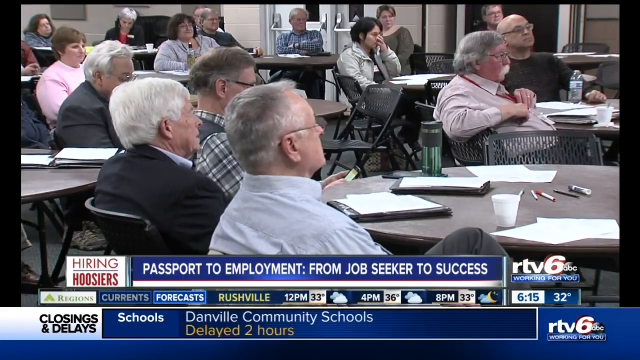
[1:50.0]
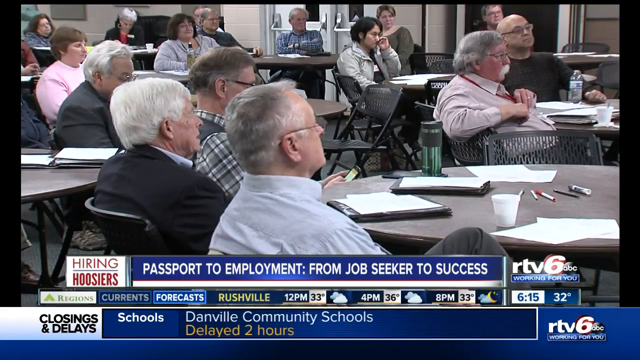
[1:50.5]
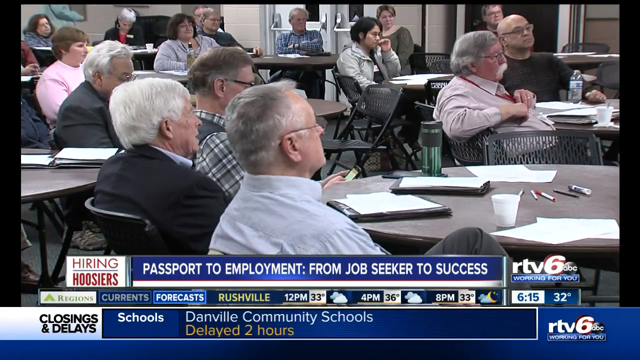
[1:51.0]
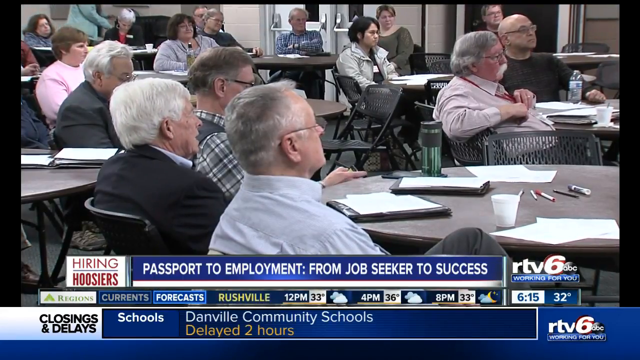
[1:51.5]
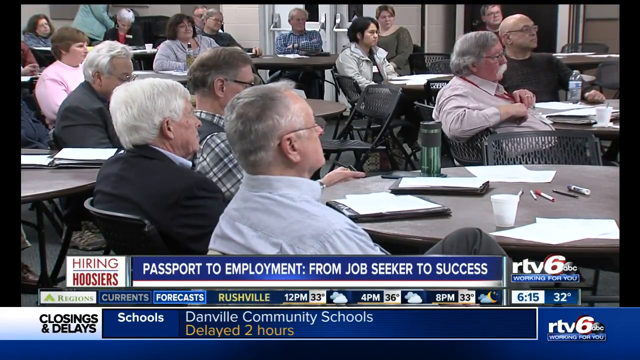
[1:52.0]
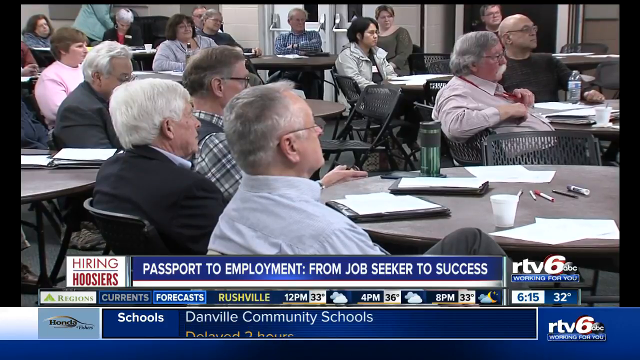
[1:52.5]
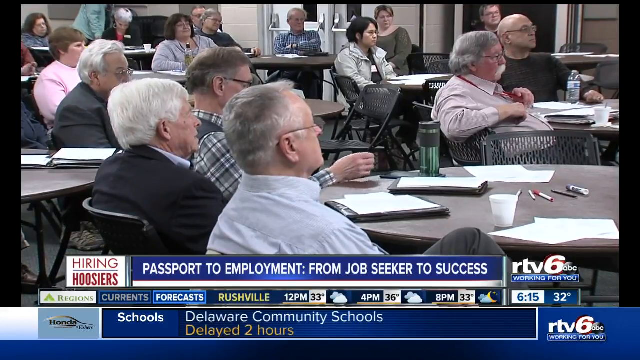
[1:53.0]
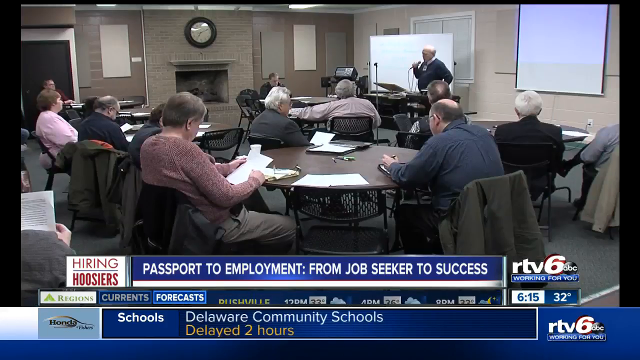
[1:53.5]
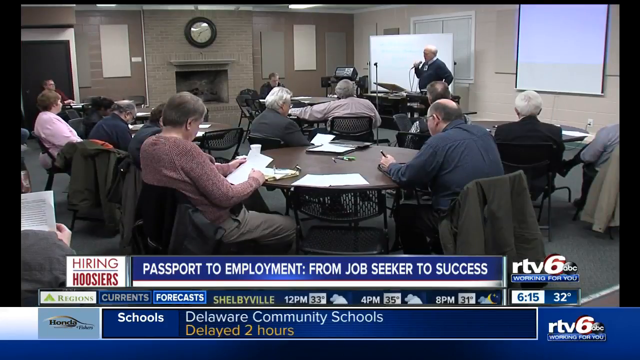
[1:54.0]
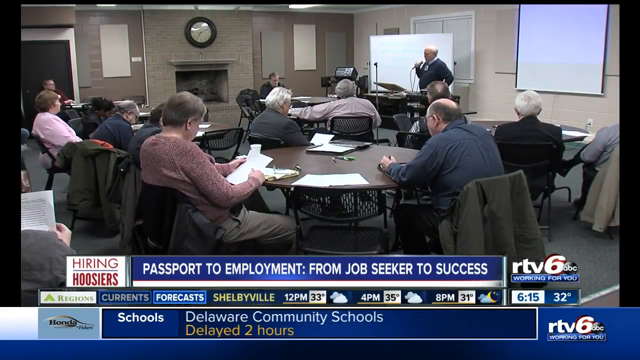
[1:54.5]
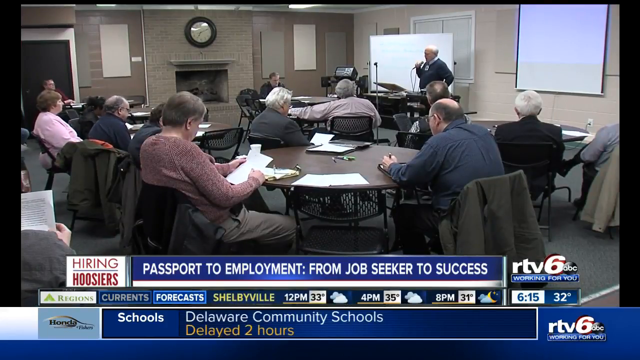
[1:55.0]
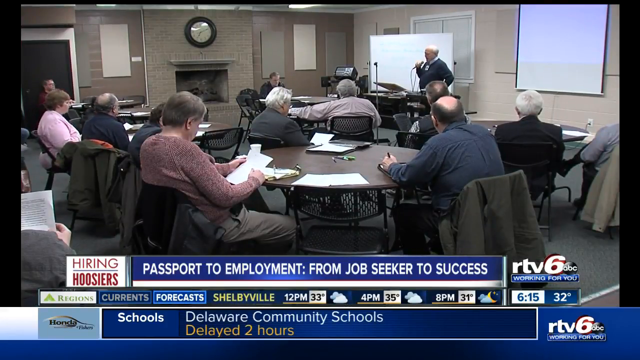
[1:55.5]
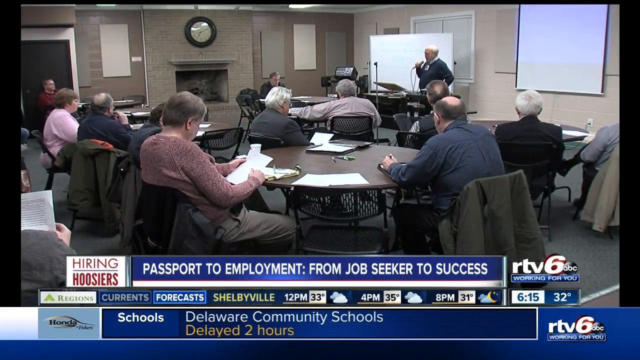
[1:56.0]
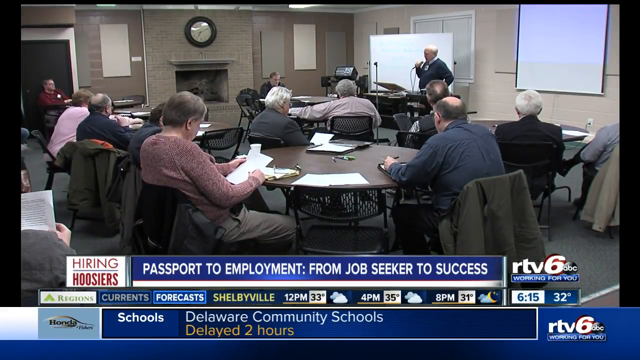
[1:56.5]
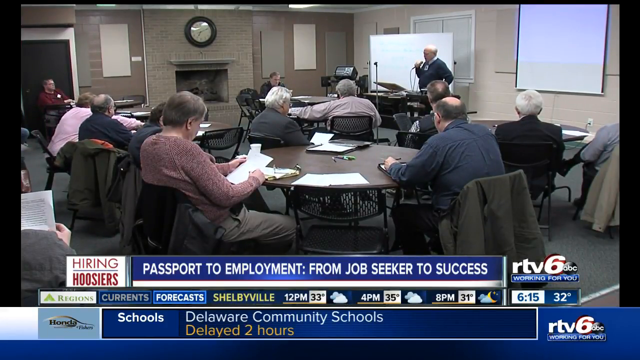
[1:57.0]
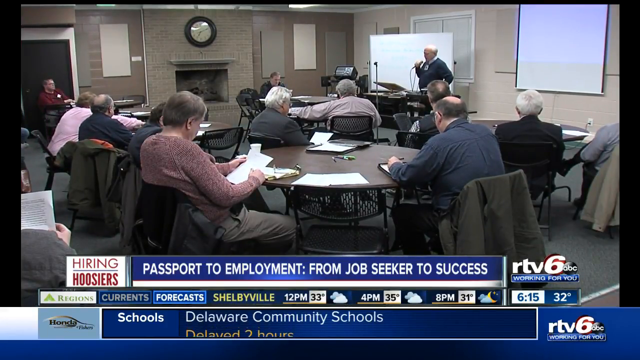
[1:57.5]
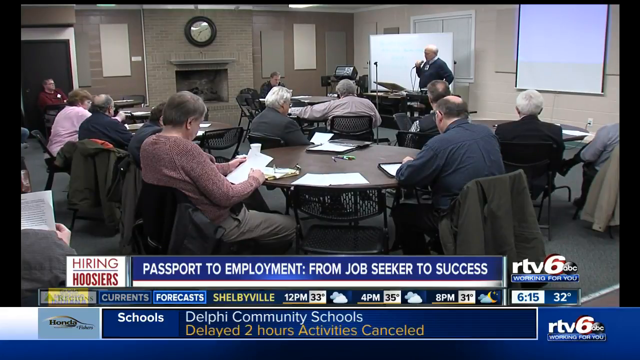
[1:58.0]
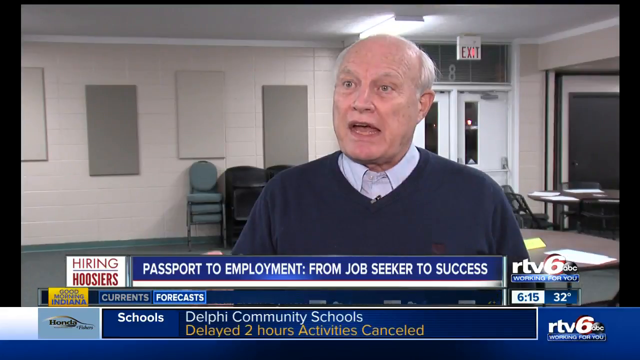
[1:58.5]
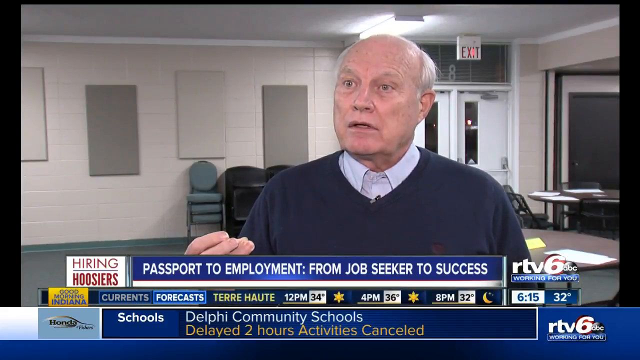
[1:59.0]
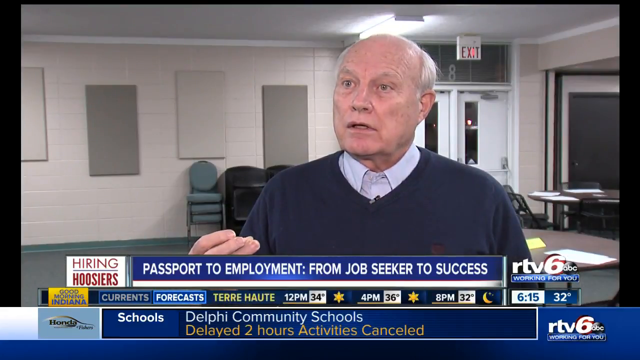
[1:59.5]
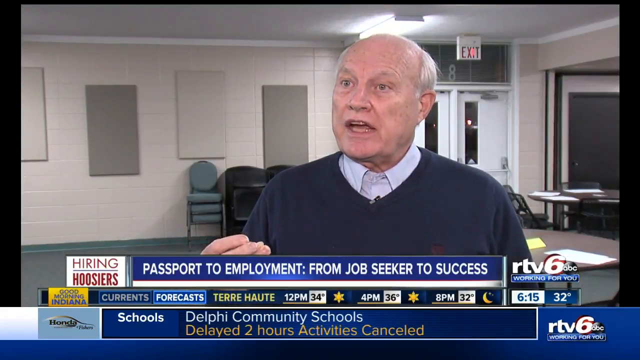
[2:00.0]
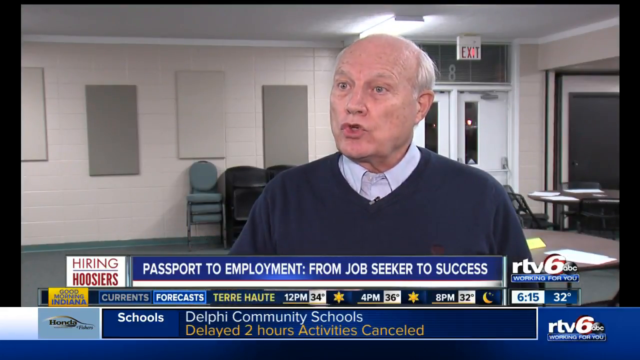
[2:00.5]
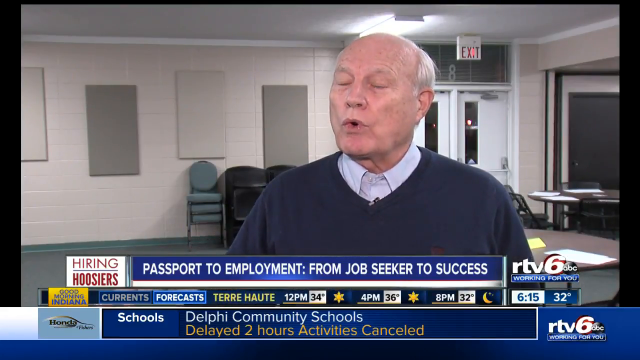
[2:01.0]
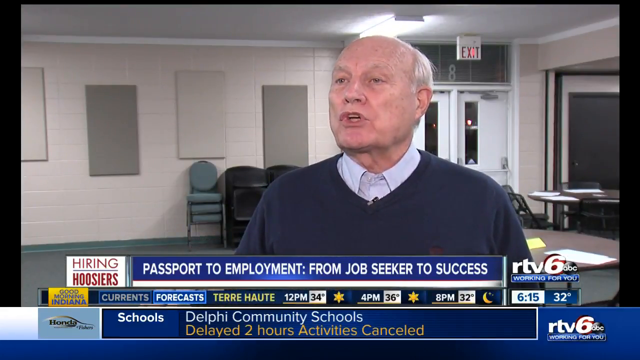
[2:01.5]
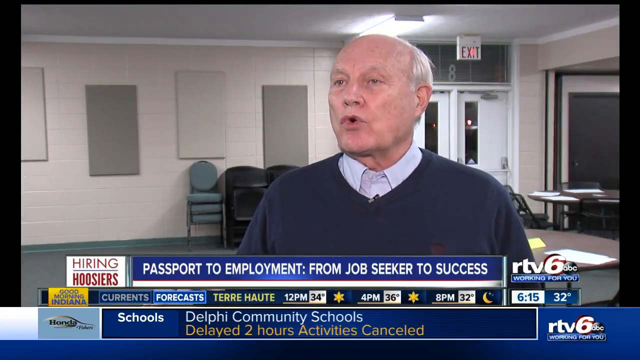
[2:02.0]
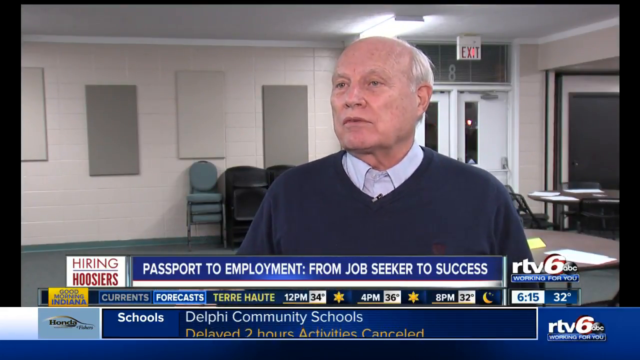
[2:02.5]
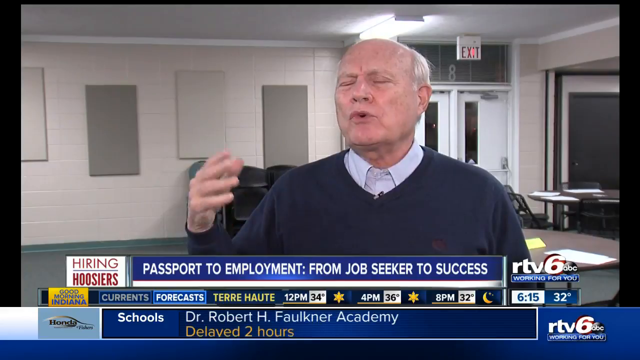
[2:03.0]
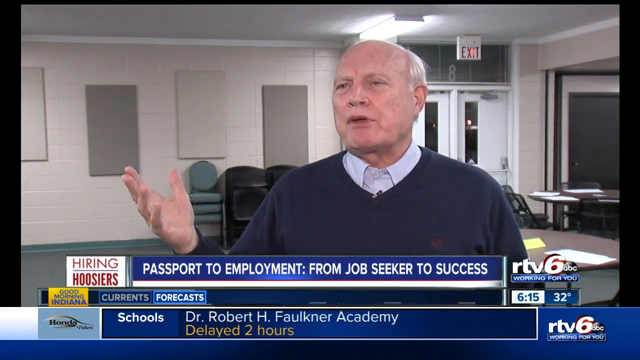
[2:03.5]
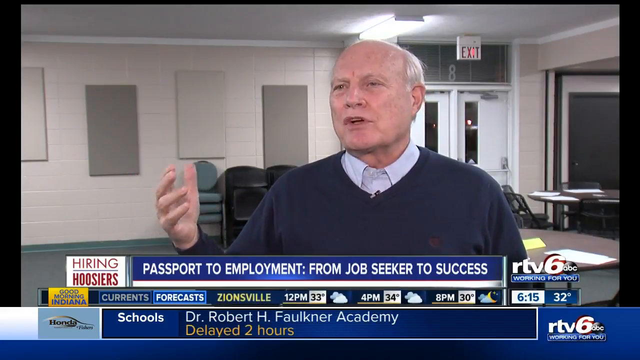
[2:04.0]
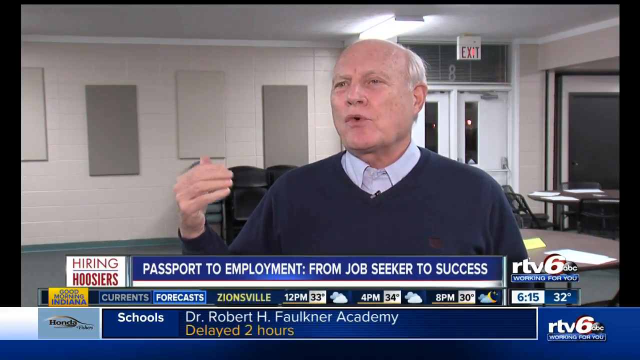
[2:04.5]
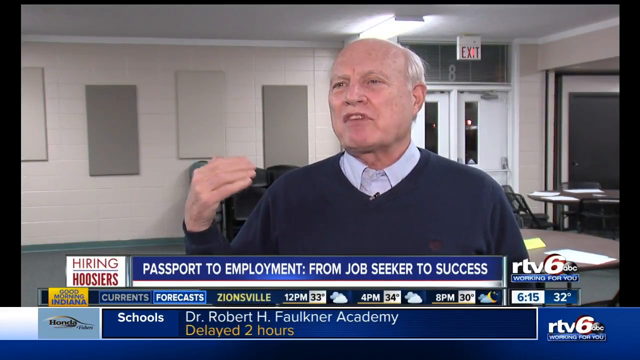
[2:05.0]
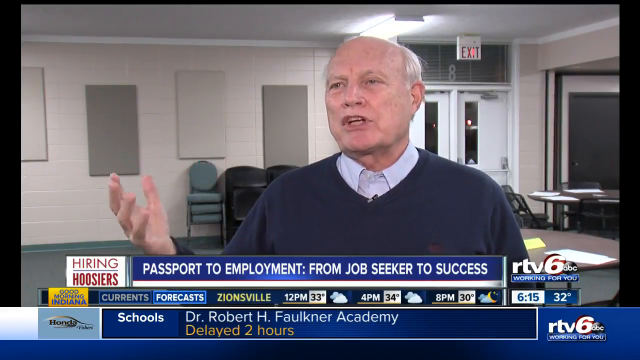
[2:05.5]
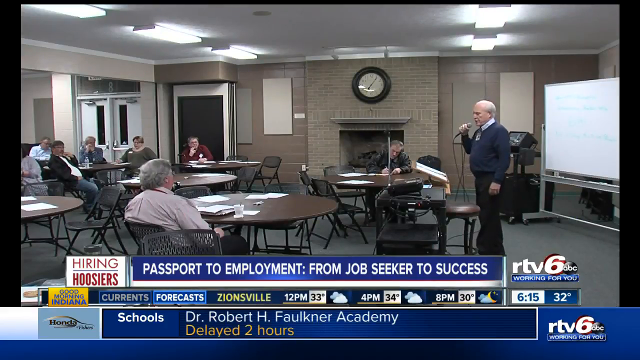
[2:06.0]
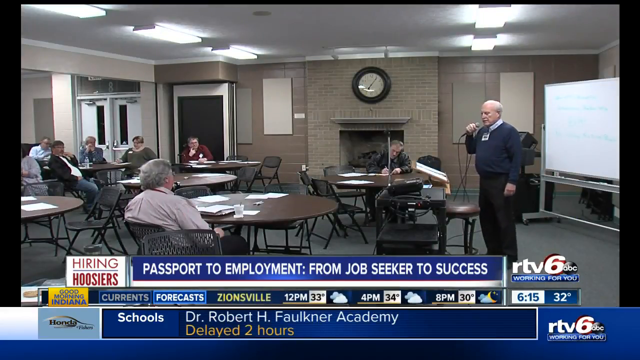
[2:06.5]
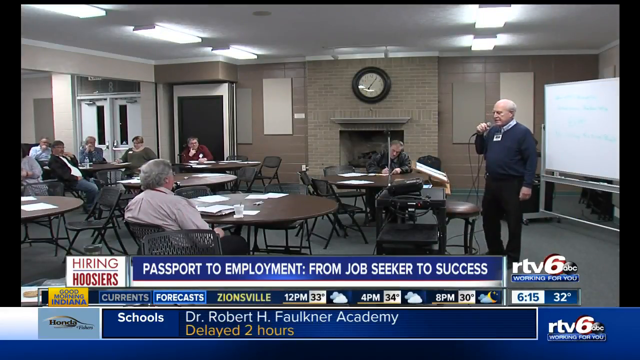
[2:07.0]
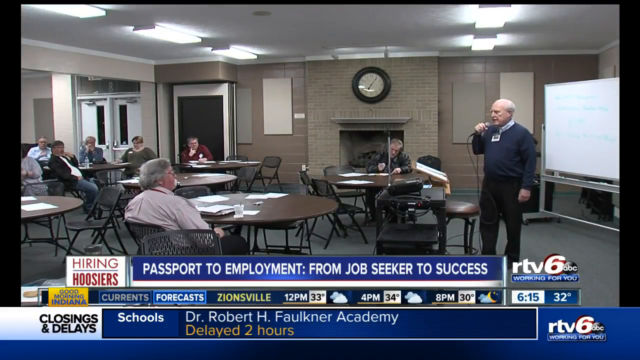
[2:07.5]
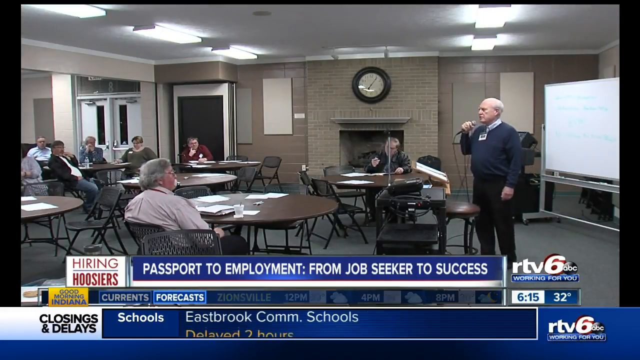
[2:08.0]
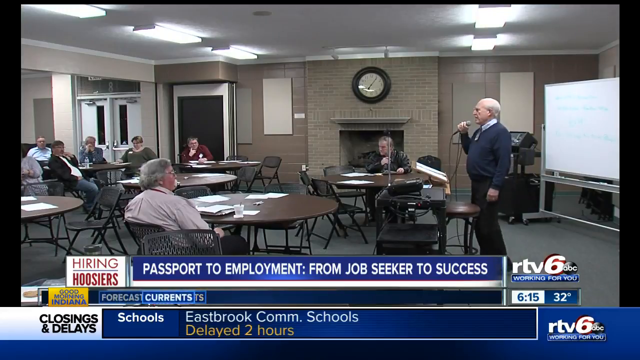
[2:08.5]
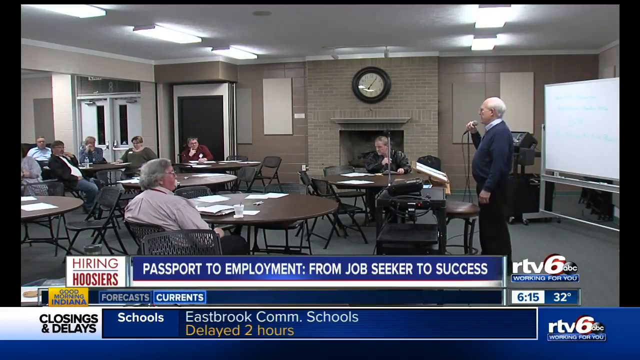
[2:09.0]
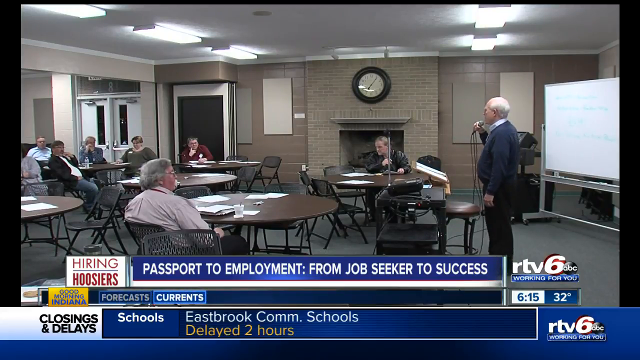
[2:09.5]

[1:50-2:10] The camera pans the room; someone is over by the coffee maker. Most of the room pays attention to the front, where the white-haired man speaks into his microphone. The video then cuts to the founder of Passport to Employment, and back to the big room, showing the instructor with his microphone, which has a lot of cord. The video ends on a view of the big room. Many of the same small portfolios are on the tables, along with pens, and very few beverages remain on the tables. Most people are paying close attention to the speaker.